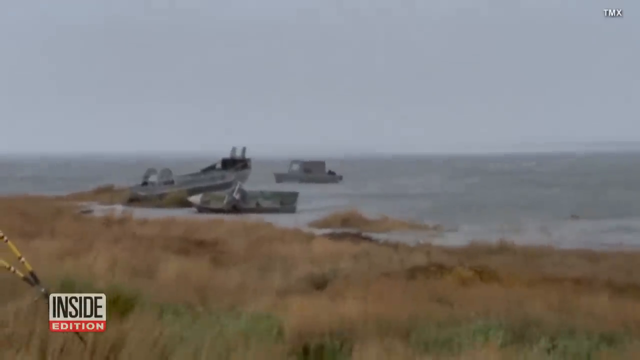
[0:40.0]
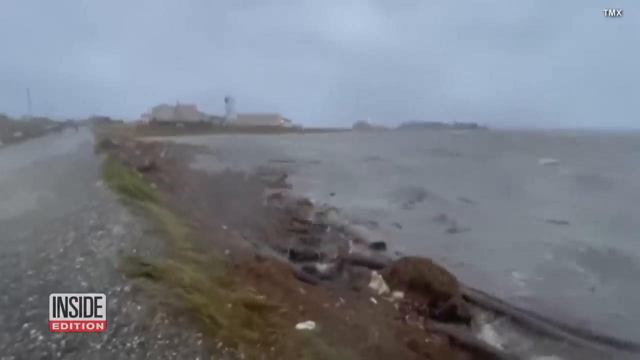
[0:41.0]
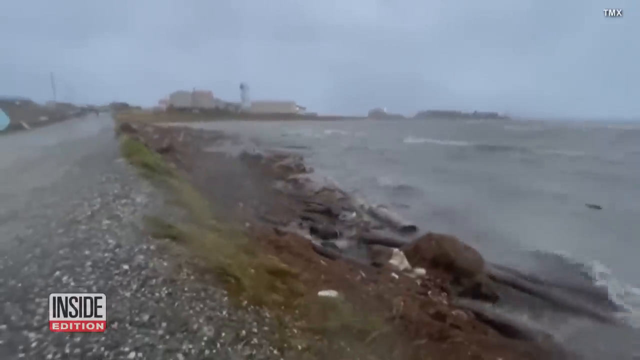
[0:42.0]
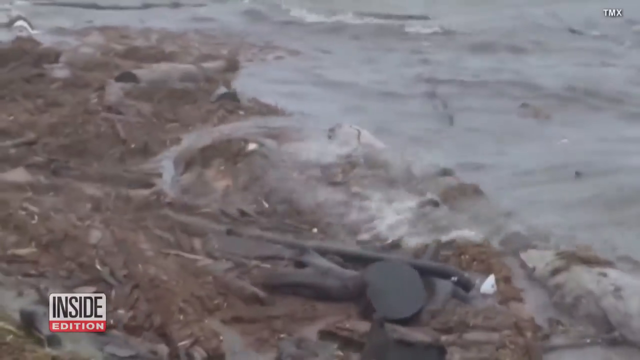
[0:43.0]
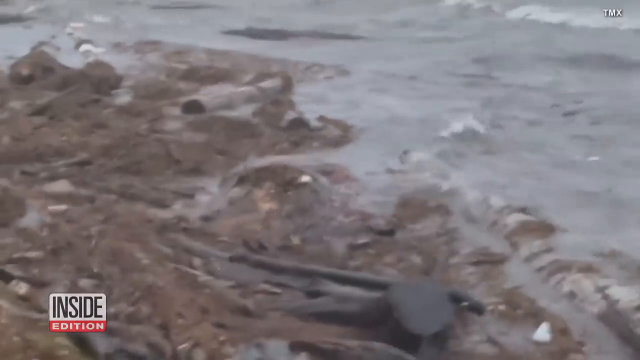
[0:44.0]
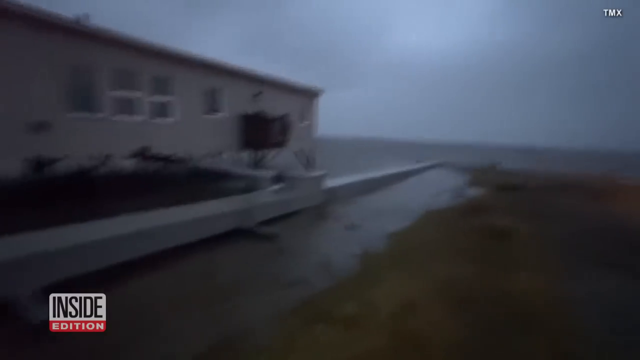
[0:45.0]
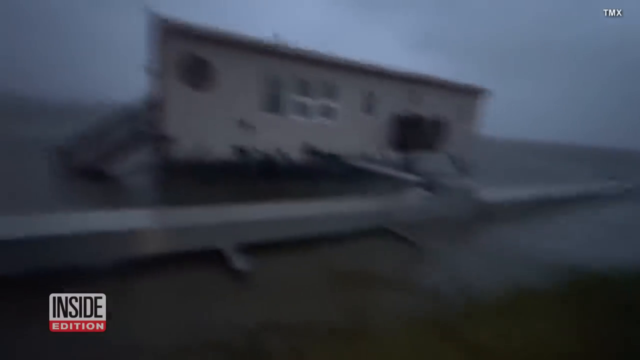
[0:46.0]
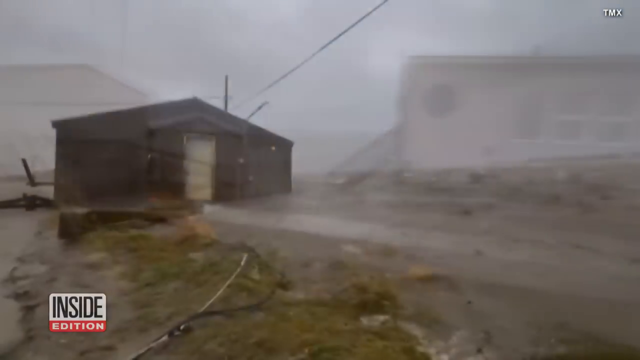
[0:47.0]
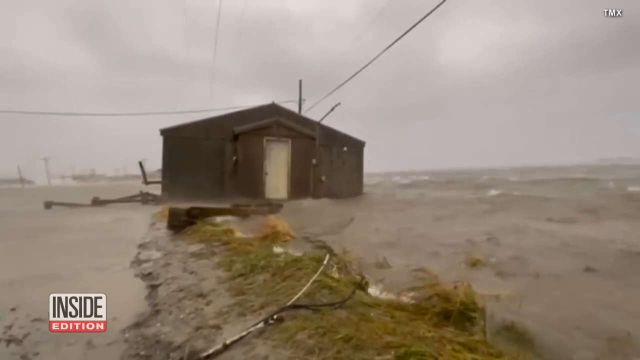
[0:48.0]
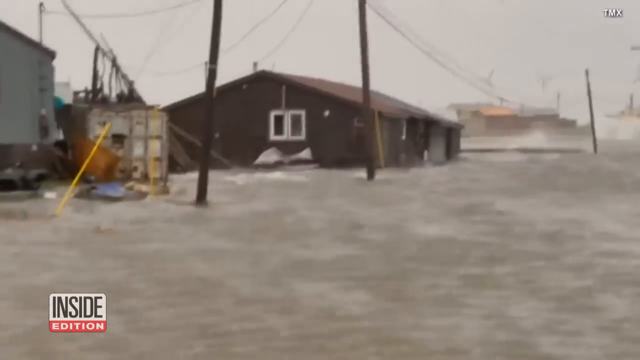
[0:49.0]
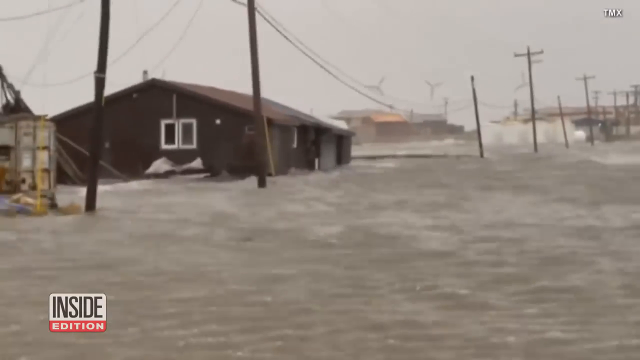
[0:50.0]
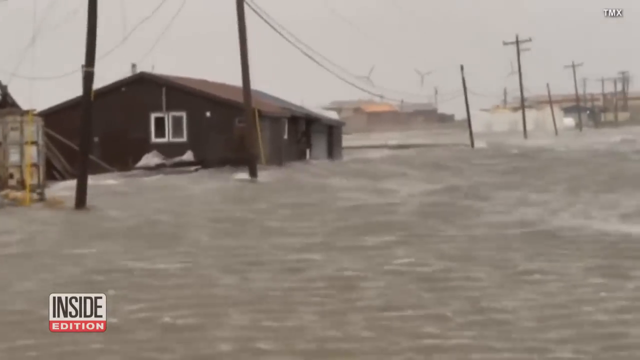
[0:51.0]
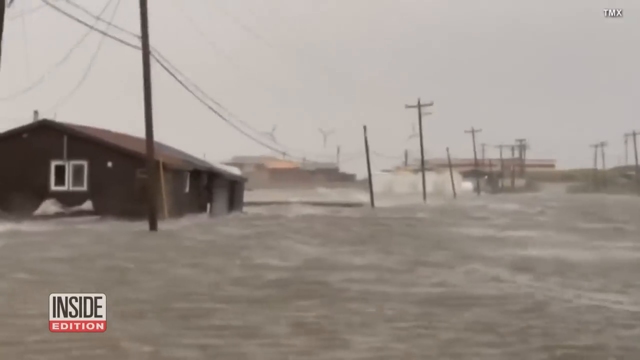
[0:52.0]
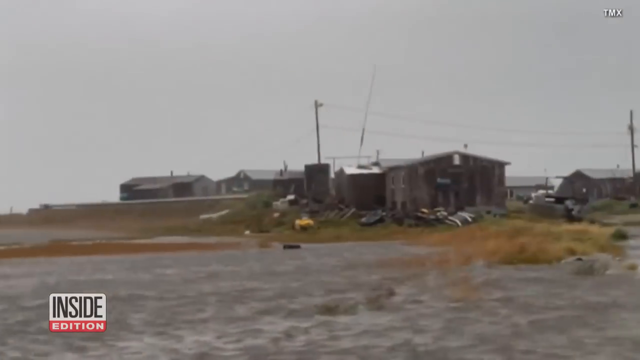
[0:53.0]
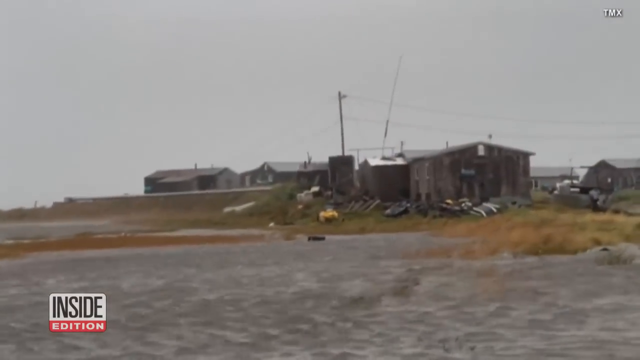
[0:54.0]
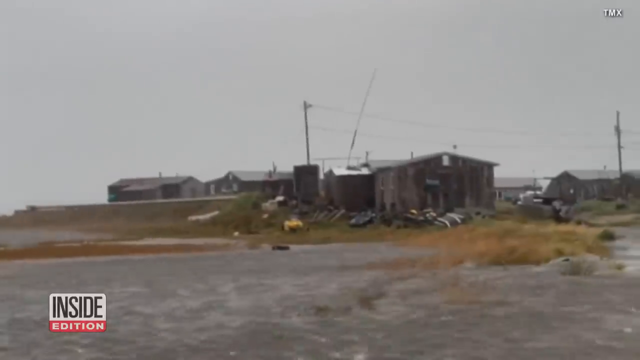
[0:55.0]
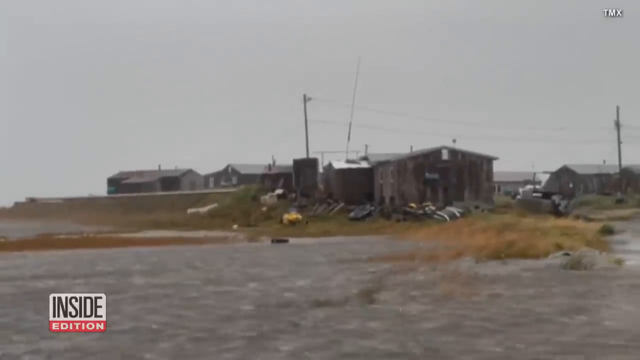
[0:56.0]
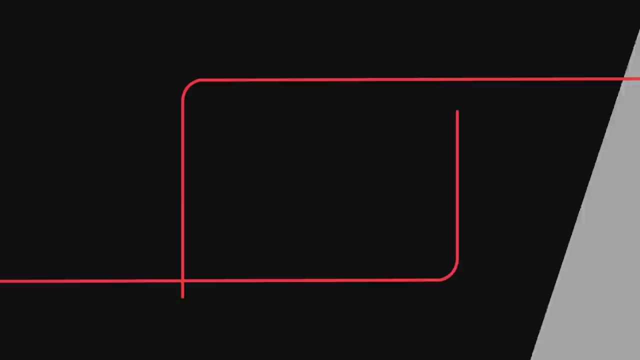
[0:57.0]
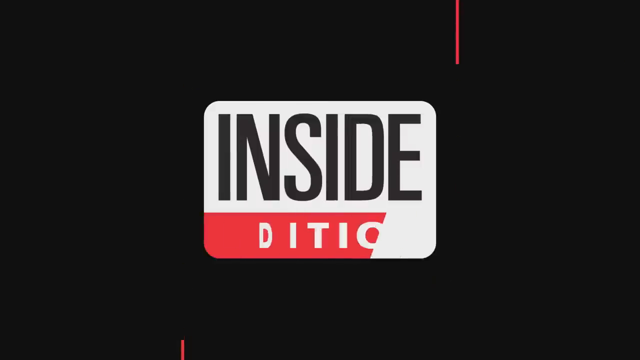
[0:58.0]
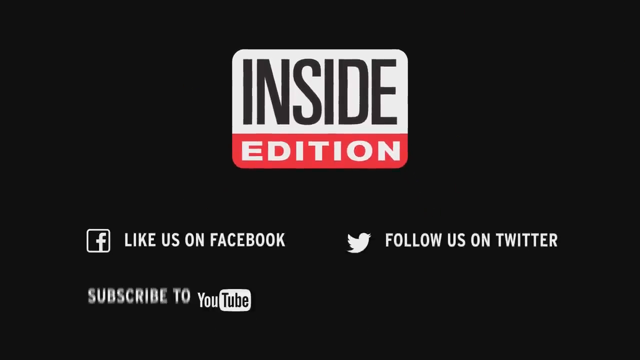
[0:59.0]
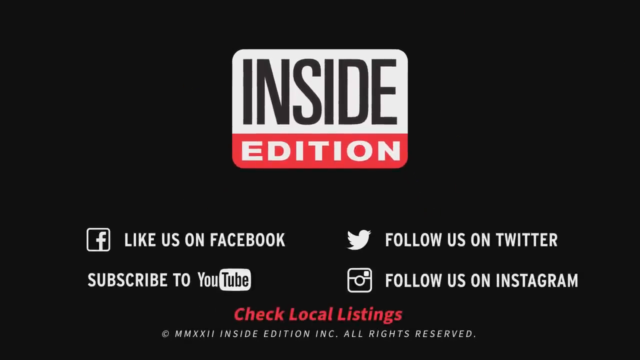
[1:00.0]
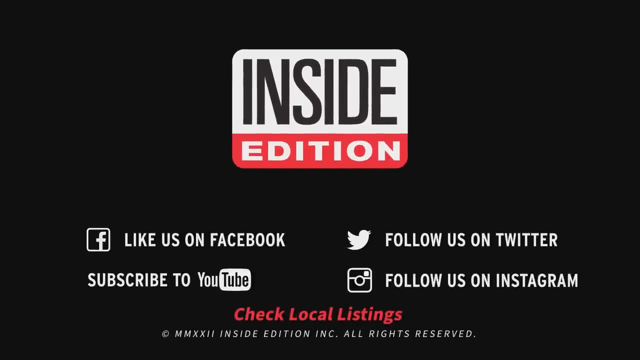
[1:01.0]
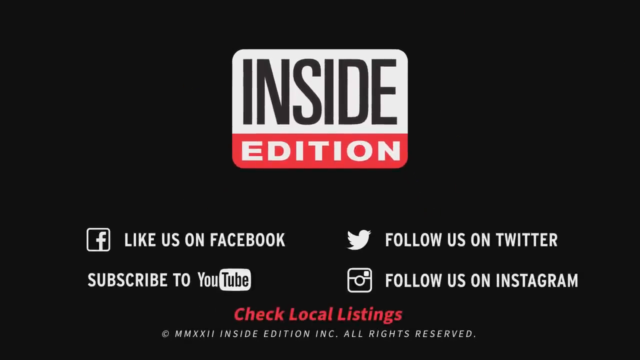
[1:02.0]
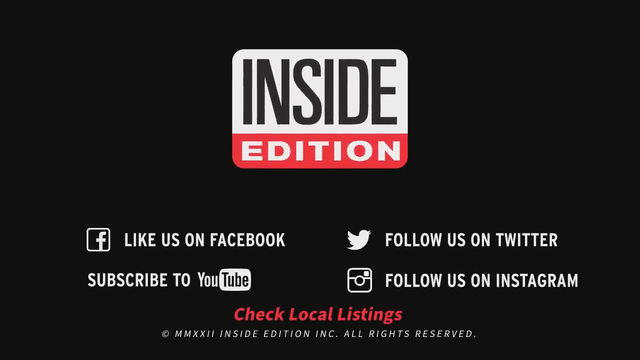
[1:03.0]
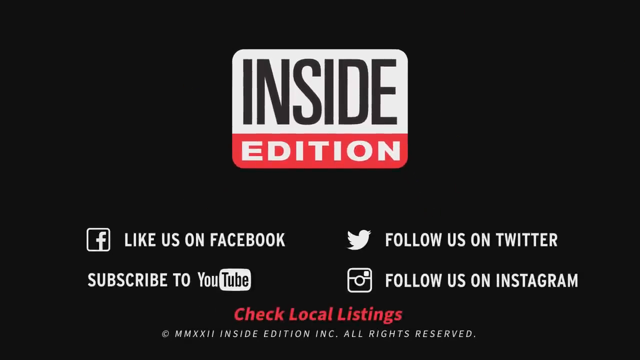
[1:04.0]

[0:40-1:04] A road partially visible on the far left side has been either destroyed or eroded by heavy waters. The camera zooms in to show much of the land overtaken by the raging current, with other debris swept in. Another transition pans from right to left across different buildings in various states of destruction. A fade-in shows a small shed surrounded by water and beginning to flood. Next, a segment shows the water completely covering the road under several feet so that it is no longer visible. Many or all of the houses here have been either completely or partially flooded. Several buildings afterward have much of their wood or other materials destroyed or damaged. At the end, the video fades to black with a stylistic effect for the news program Inside Edition.